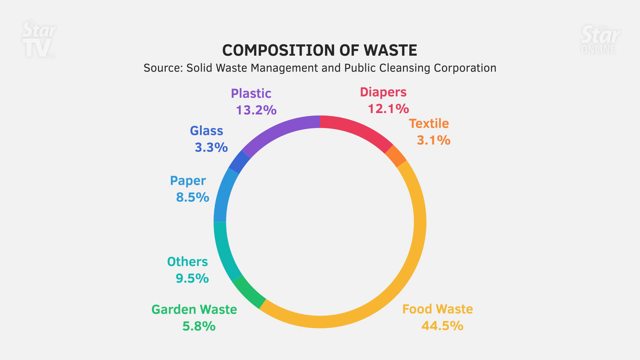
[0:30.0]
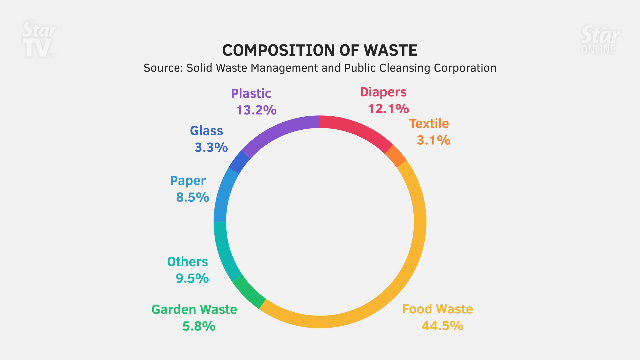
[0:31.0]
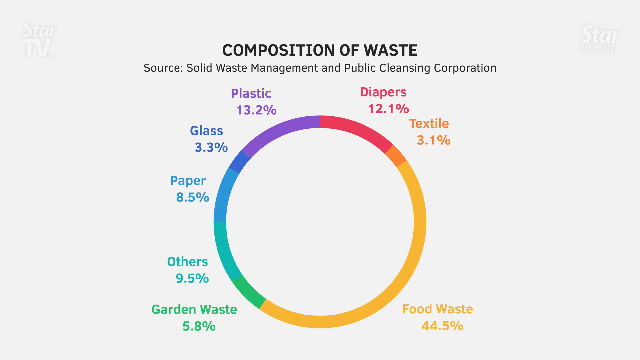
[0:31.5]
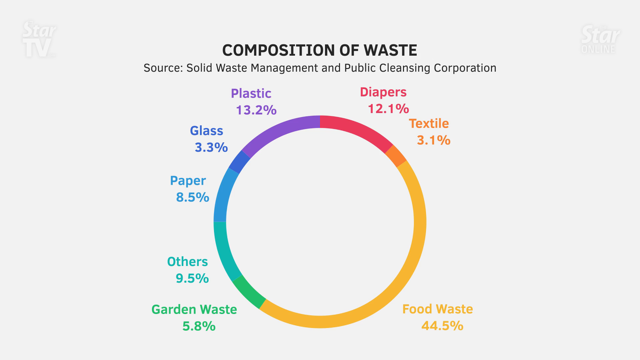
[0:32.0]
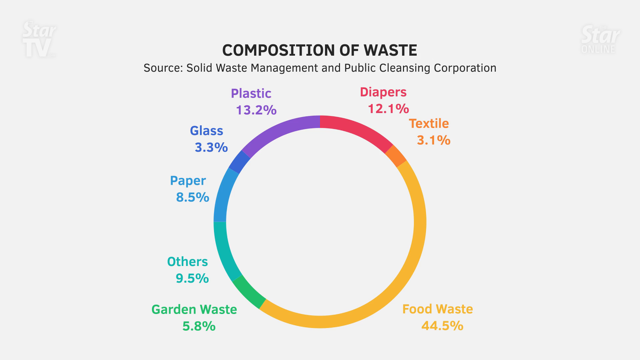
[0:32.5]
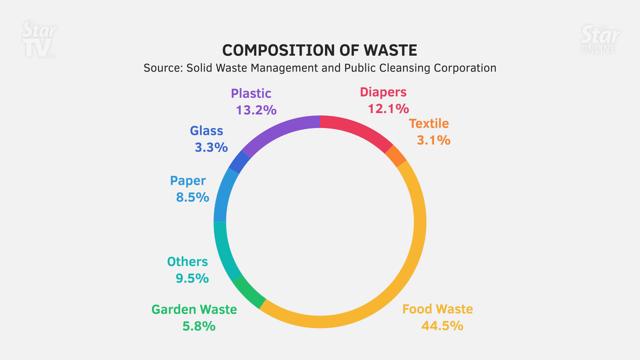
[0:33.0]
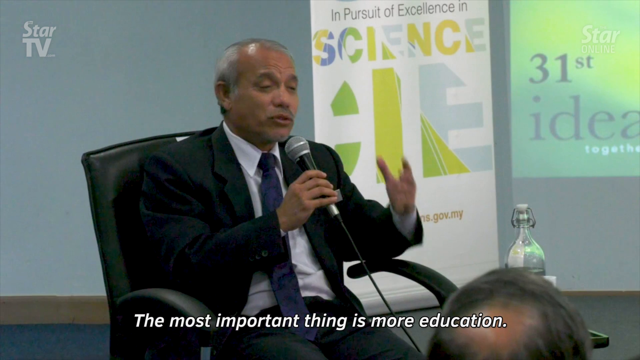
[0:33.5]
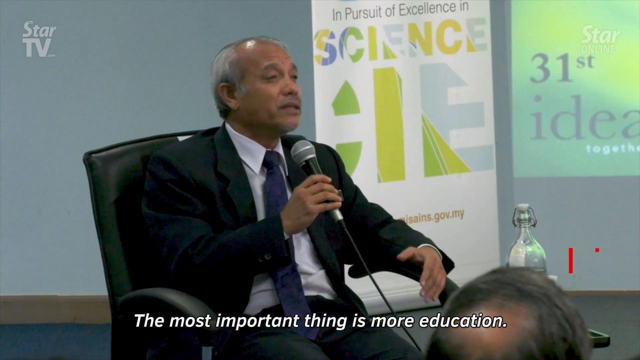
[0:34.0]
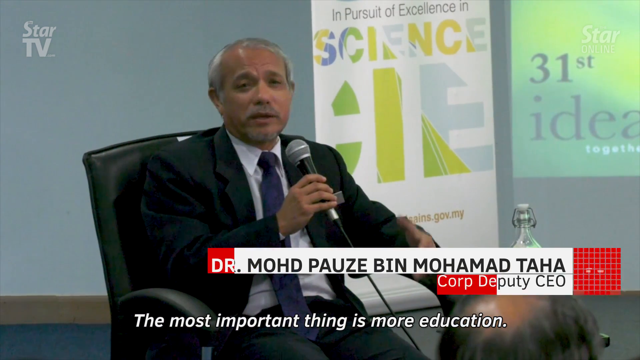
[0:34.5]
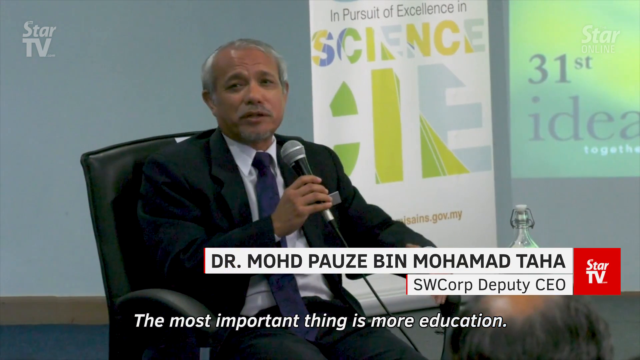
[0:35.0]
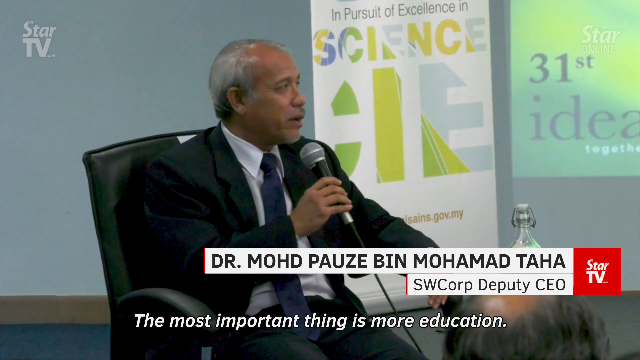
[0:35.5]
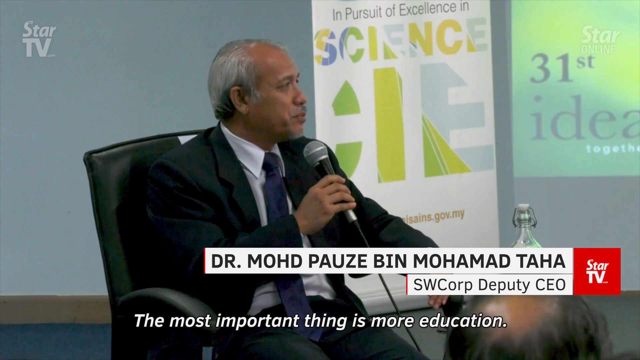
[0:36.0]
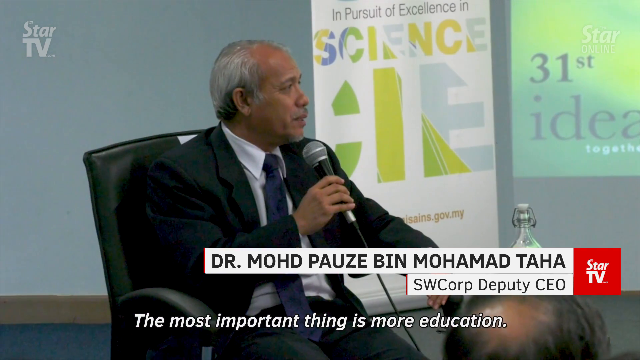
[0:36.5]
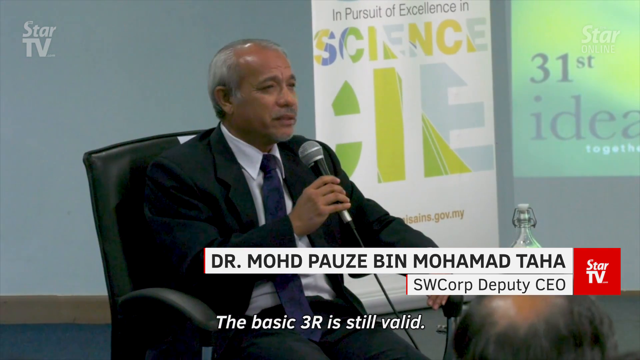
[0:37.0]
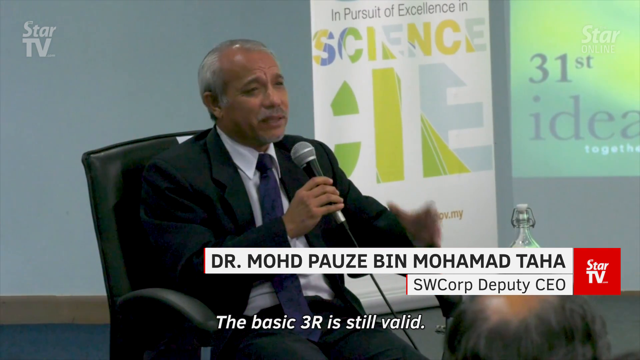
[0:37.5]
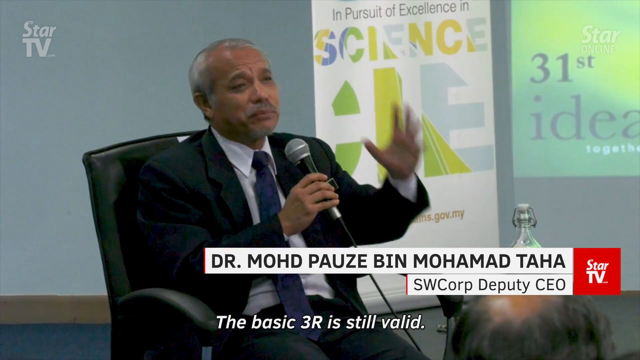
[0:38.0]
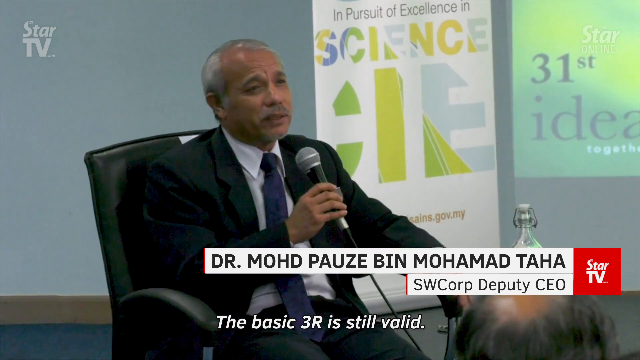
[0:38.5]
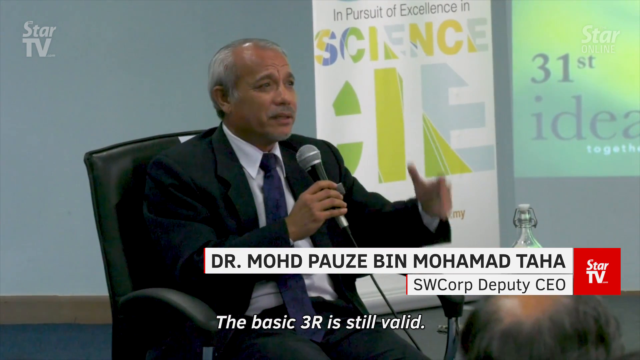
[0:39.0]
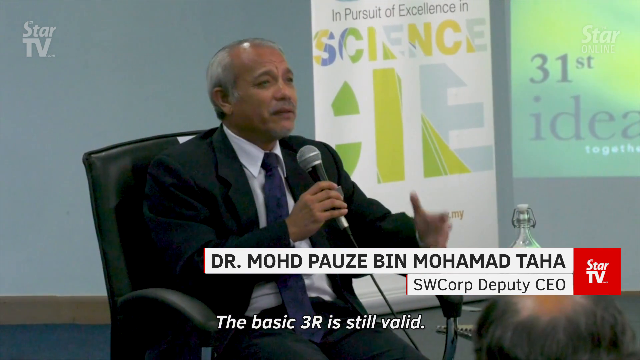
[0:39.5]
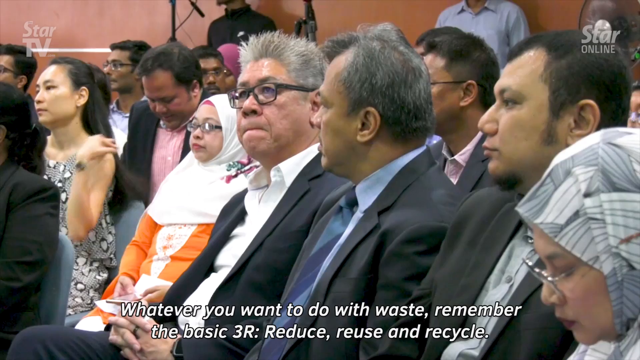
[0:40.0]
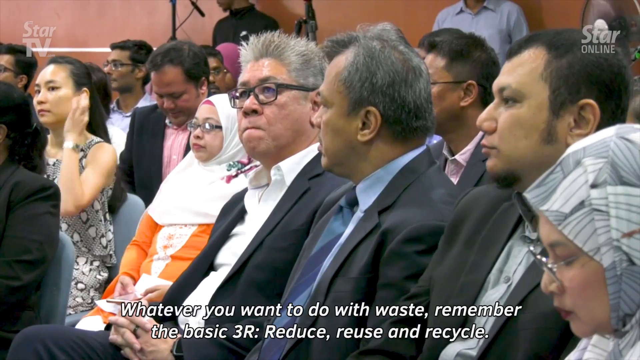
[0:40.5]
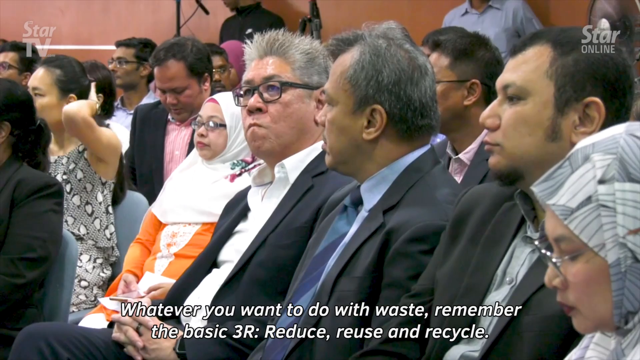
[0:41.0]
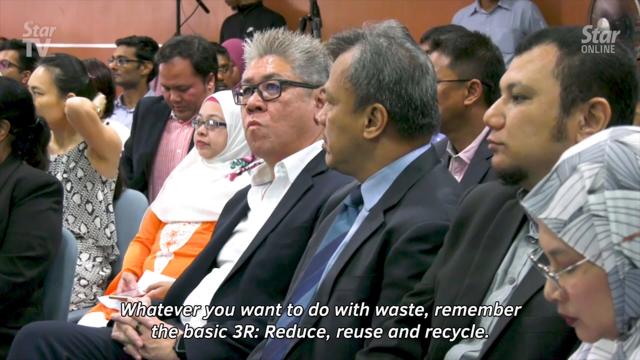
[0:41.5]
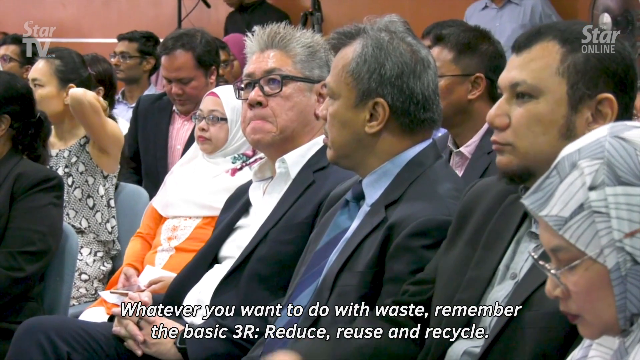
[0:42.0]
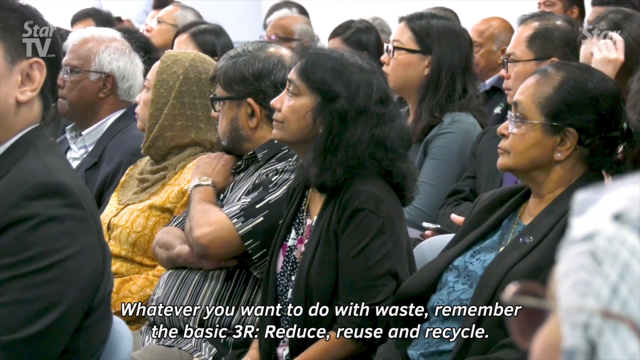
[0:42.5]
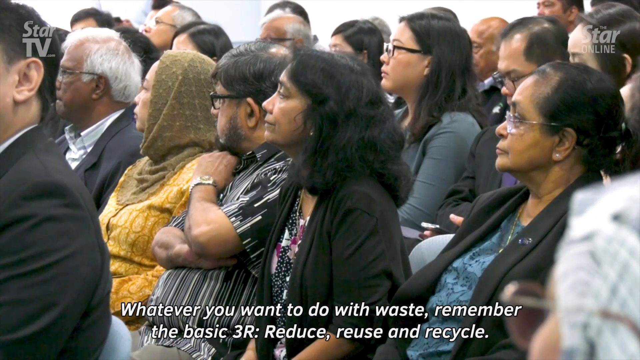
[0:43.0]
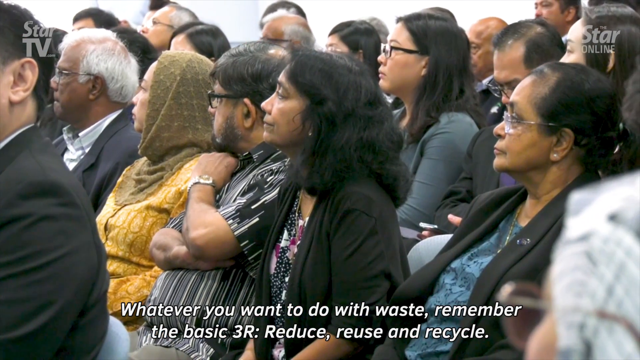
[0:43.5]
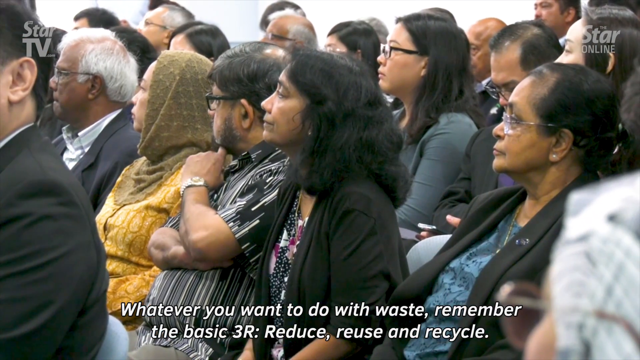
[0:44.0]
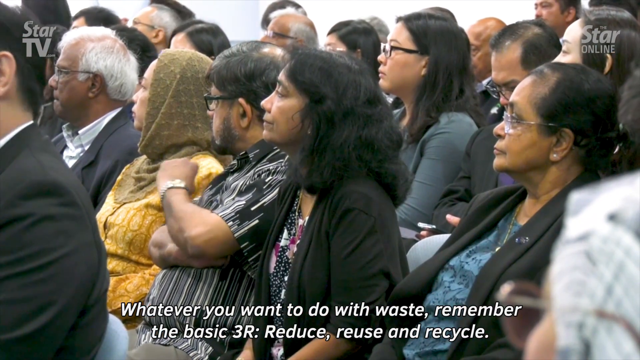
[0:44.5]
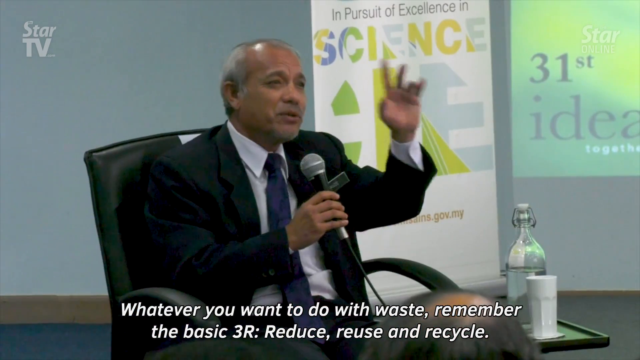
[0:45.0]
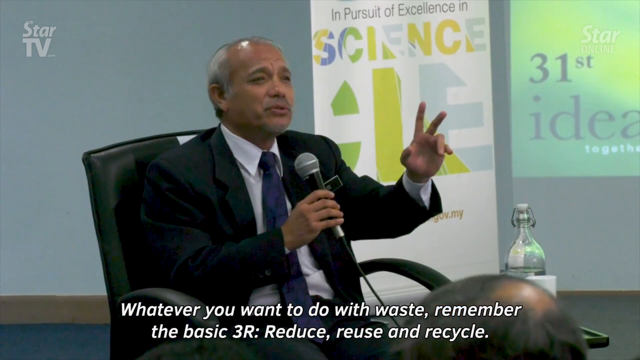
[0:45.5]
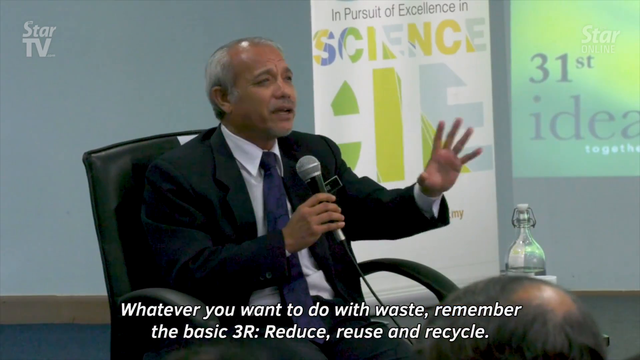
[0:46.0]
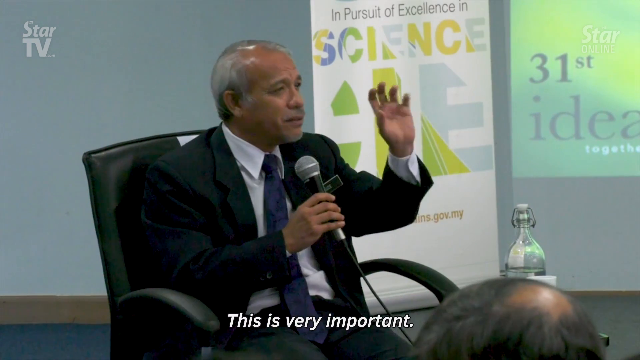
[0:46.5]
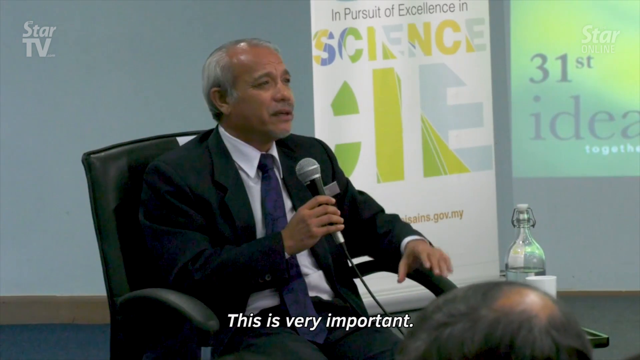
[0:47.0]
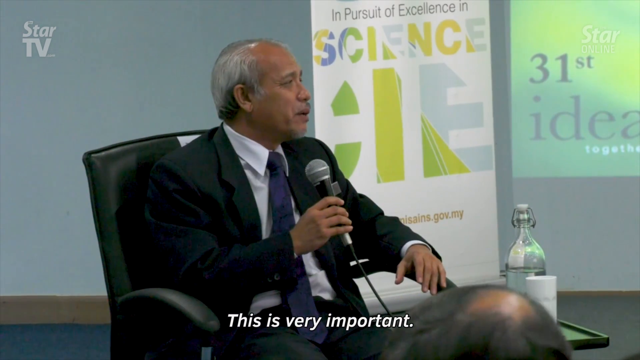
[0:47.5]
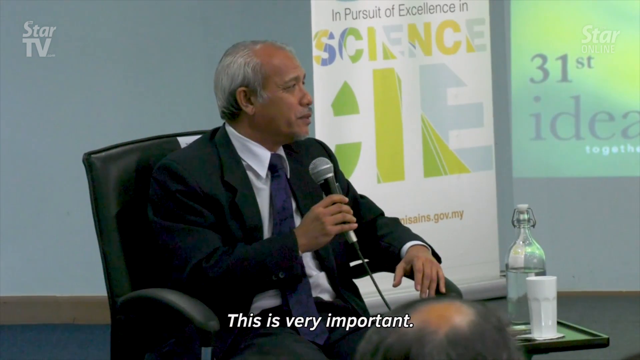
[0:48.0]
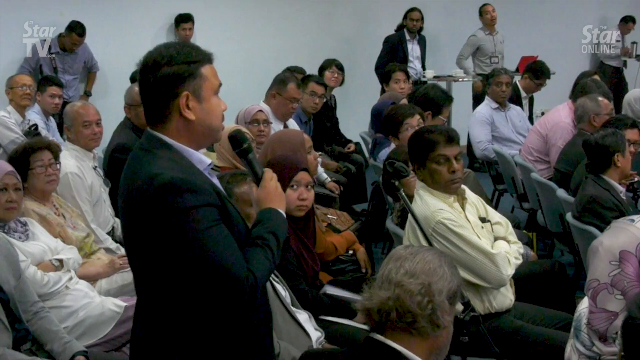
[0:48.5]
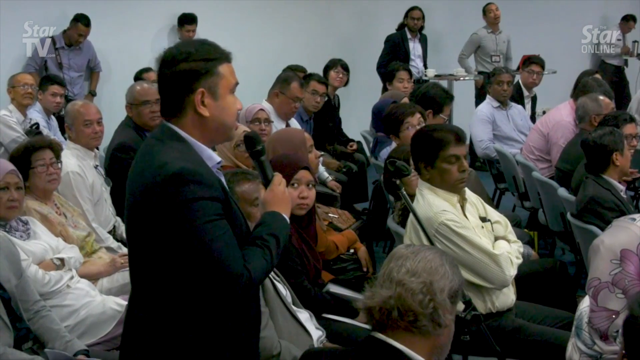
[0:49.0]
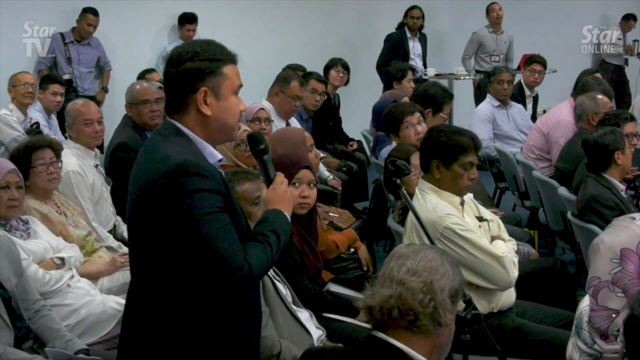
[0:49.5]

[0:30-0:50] The circular graph of waste composition remains on screen, and then the video returns to the conference on solid waste management. One of the men on the platform now holds the microphone: Dr. Muhammad Taha, a deputy CEO of a waste company. His words appear on screen as captions provided by the StarTV station. Dr. Taha says that the most important thing in waste management is education, and that the three R's, reduce, reuse and recycle, are still the most important things to consider when dealing with waste. He starts to sit forward, and the microphone is given to someone in the audience, who stands up with it and begins to ask a question.